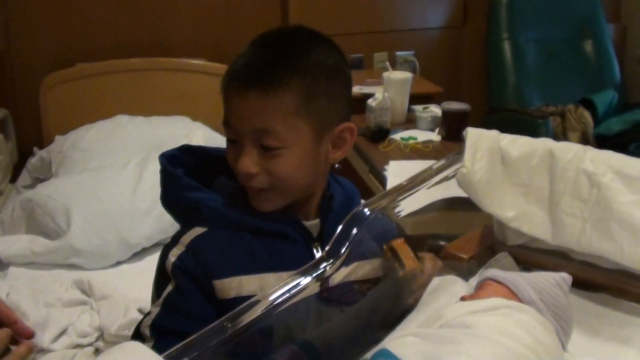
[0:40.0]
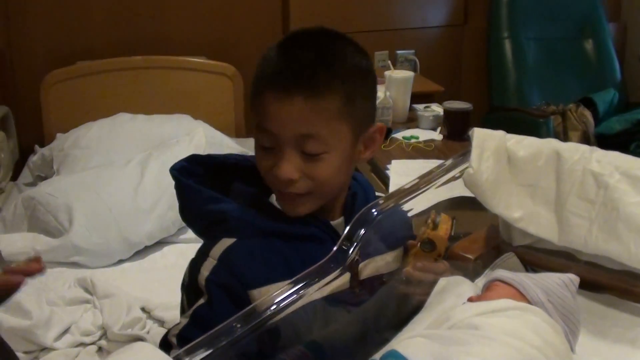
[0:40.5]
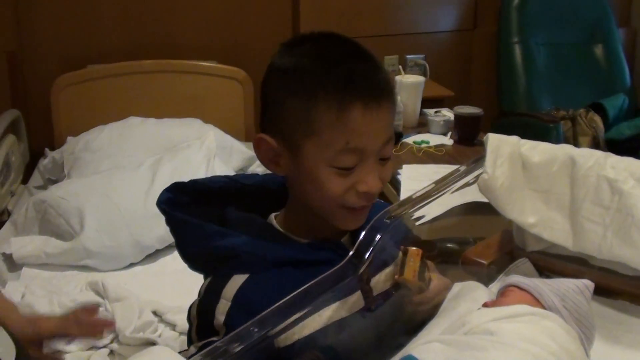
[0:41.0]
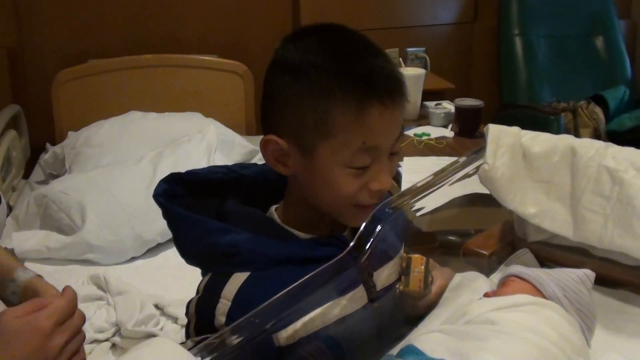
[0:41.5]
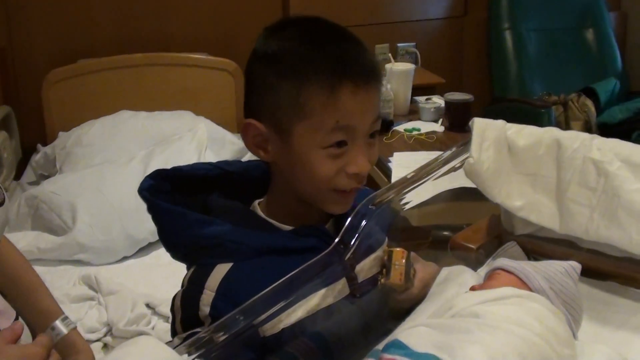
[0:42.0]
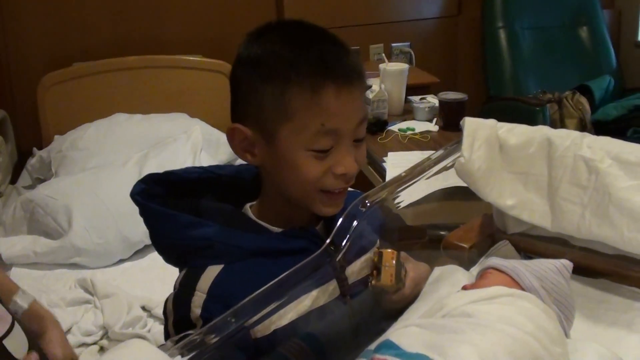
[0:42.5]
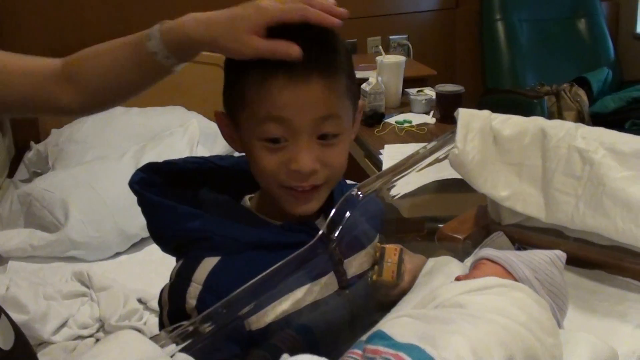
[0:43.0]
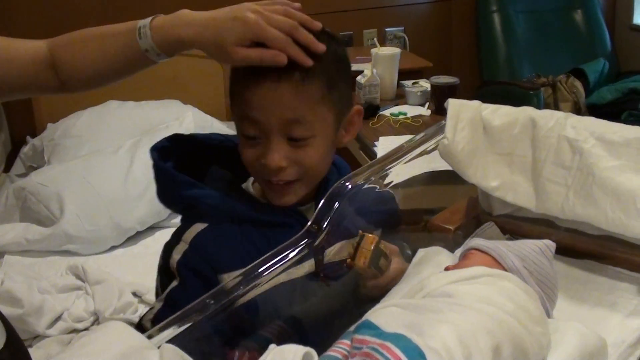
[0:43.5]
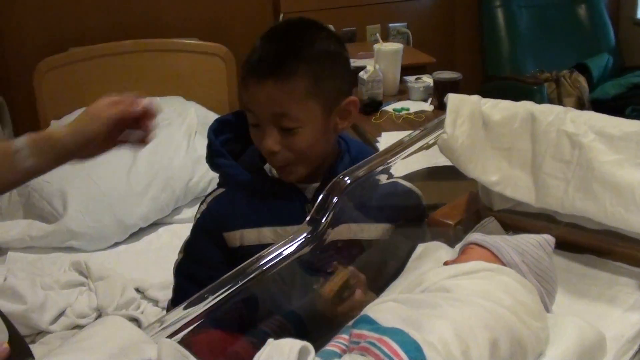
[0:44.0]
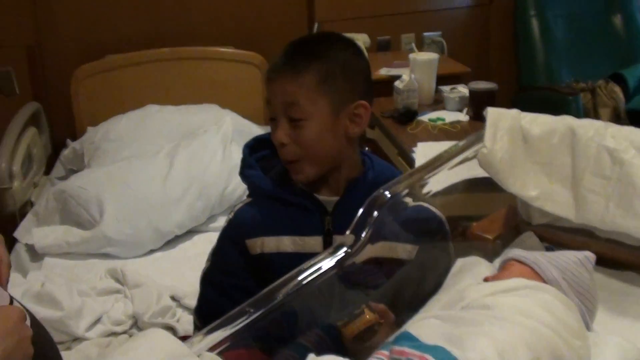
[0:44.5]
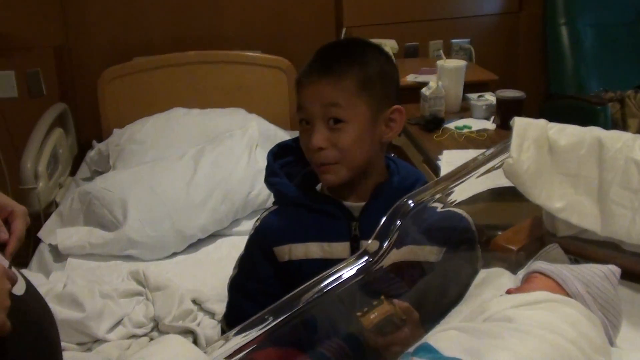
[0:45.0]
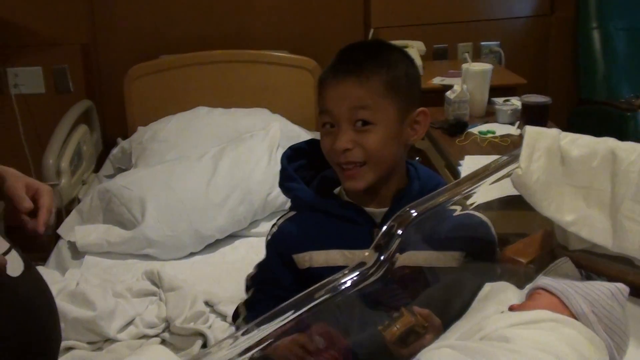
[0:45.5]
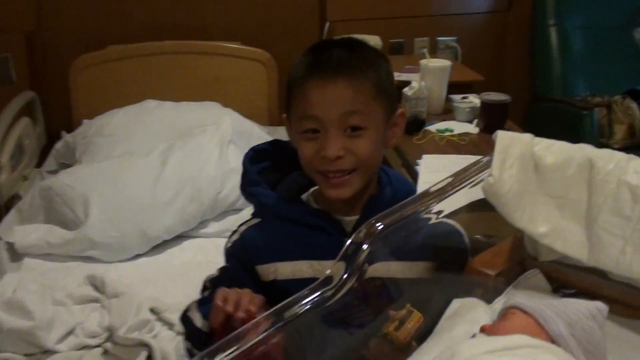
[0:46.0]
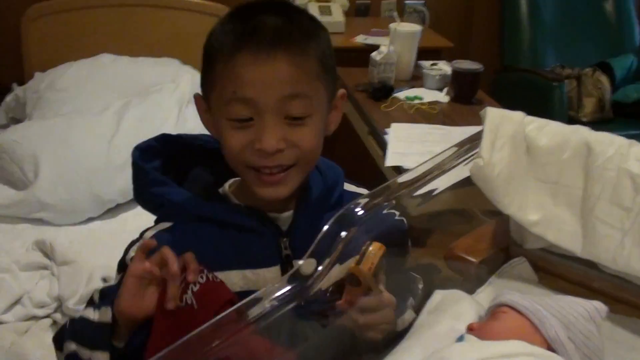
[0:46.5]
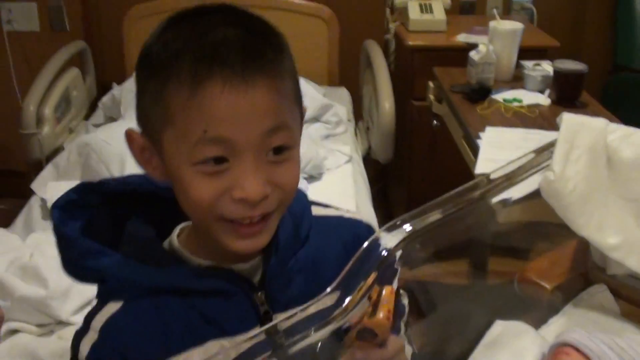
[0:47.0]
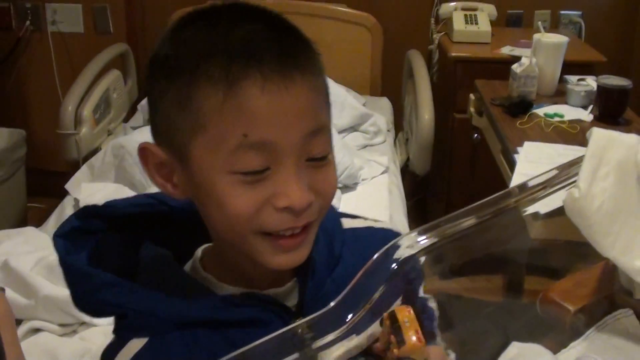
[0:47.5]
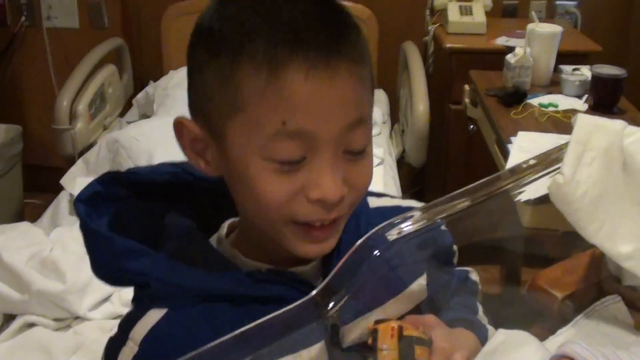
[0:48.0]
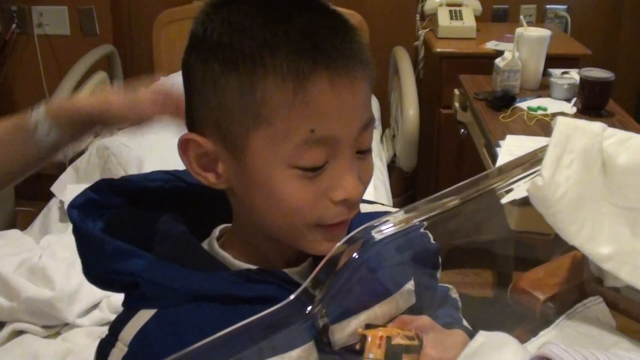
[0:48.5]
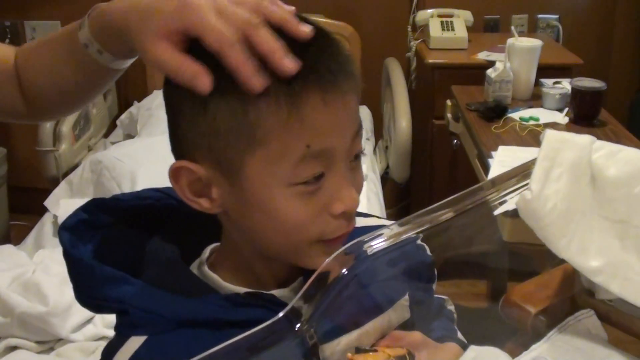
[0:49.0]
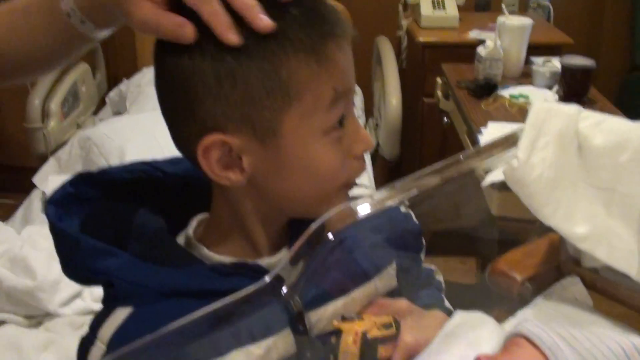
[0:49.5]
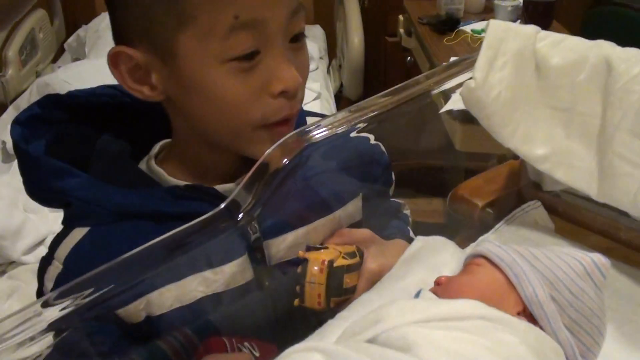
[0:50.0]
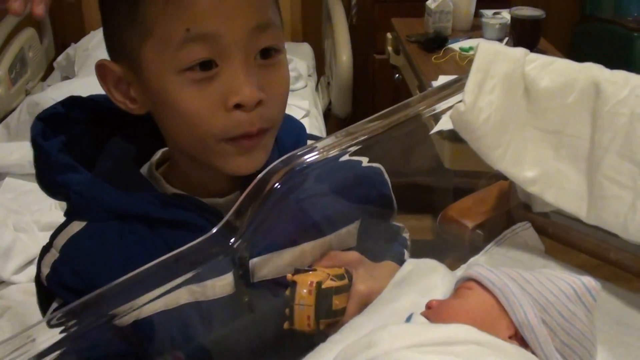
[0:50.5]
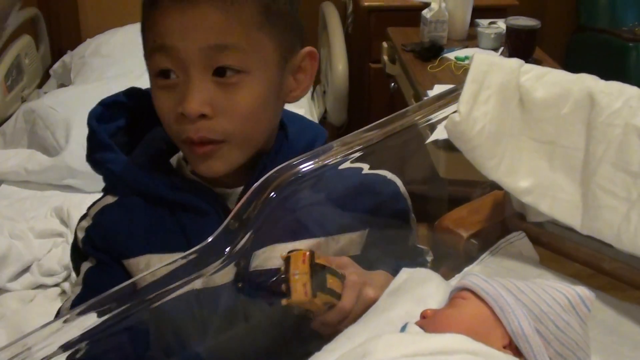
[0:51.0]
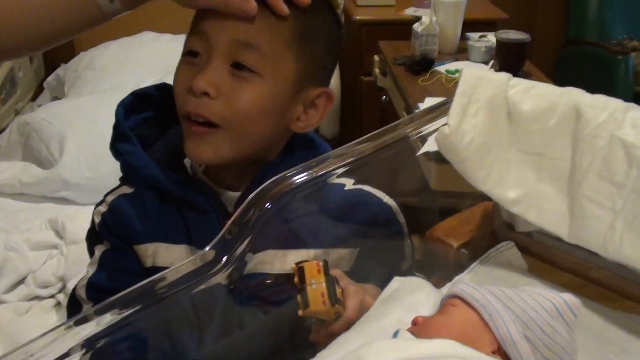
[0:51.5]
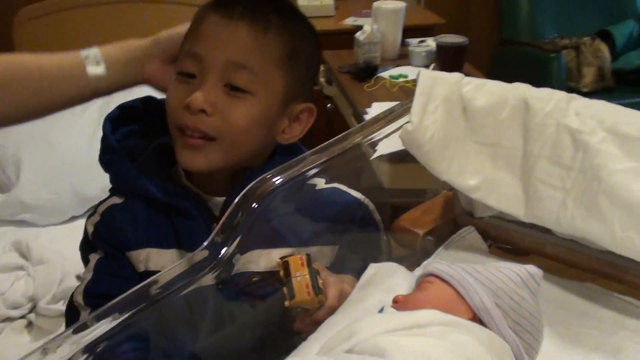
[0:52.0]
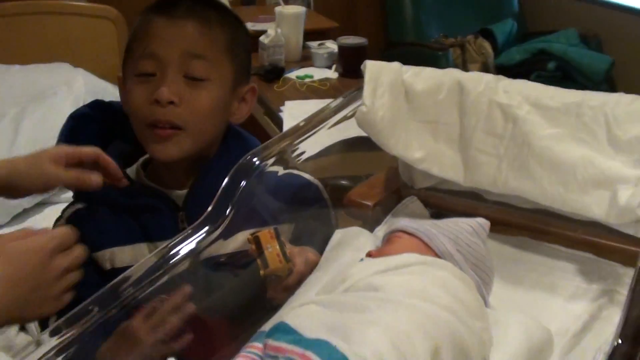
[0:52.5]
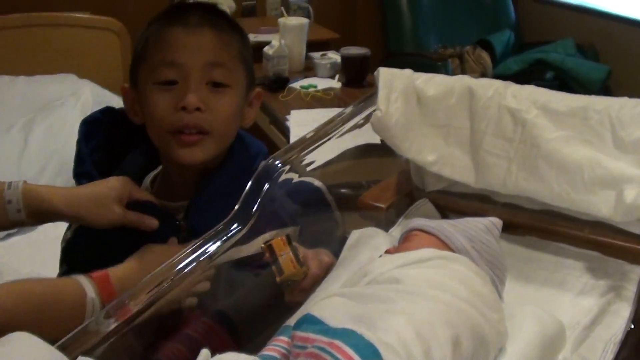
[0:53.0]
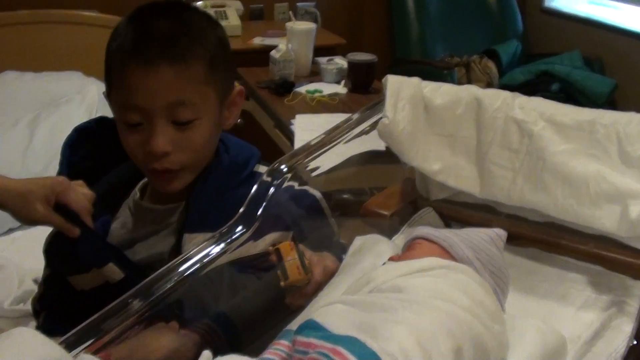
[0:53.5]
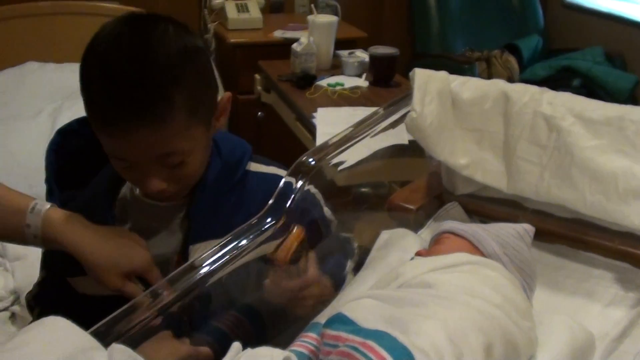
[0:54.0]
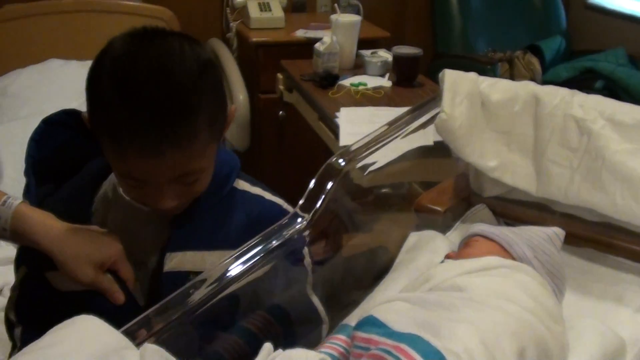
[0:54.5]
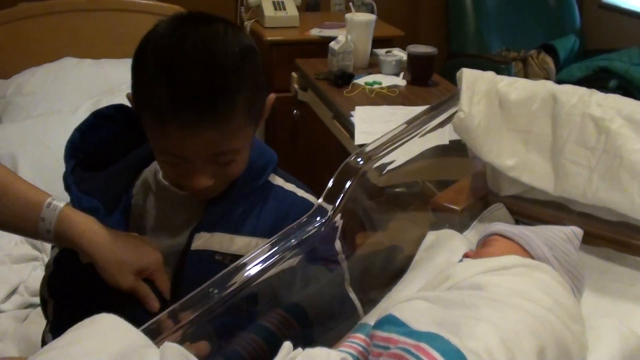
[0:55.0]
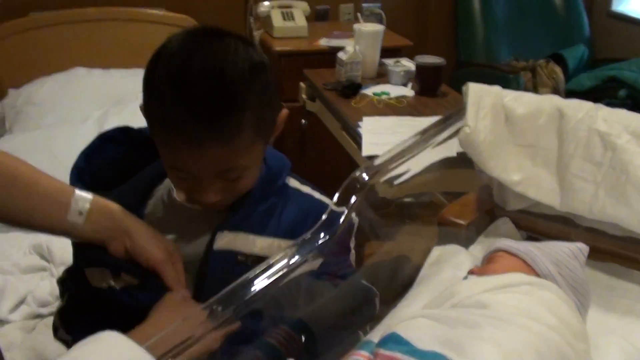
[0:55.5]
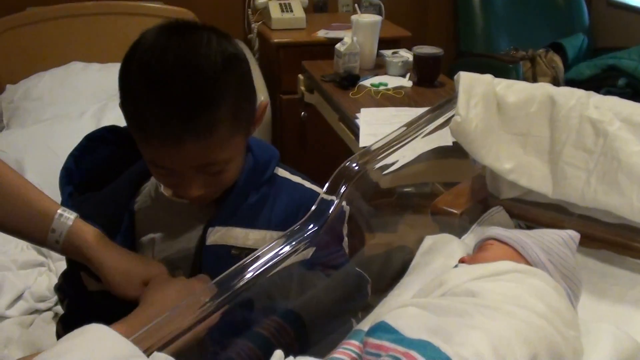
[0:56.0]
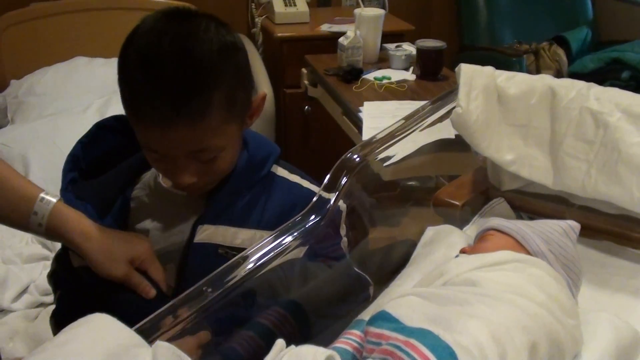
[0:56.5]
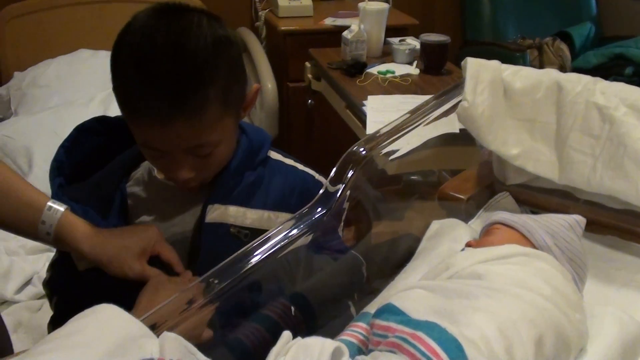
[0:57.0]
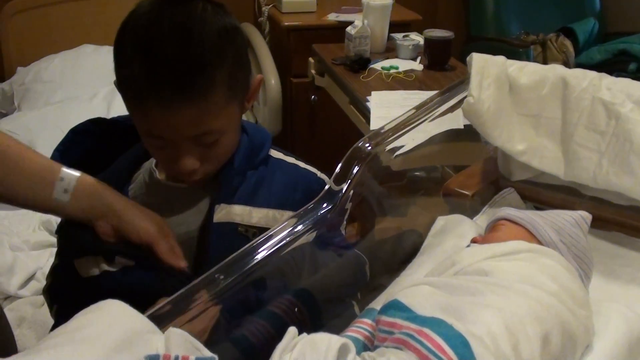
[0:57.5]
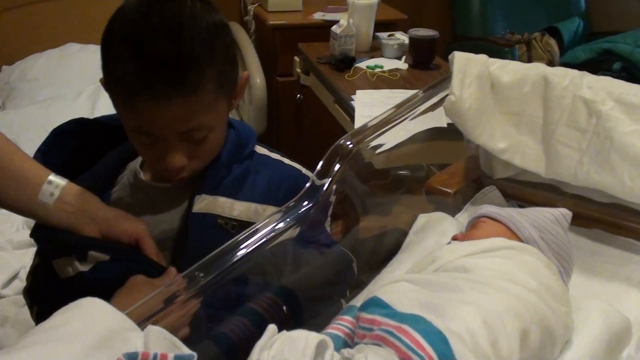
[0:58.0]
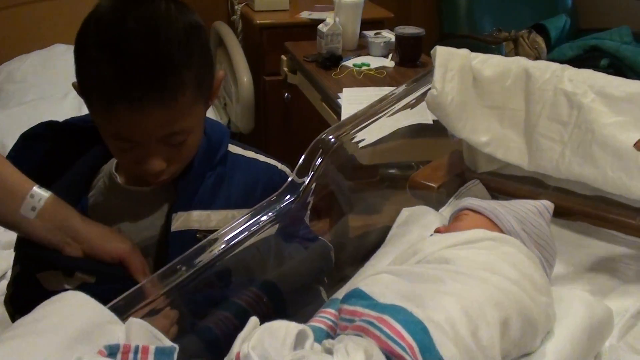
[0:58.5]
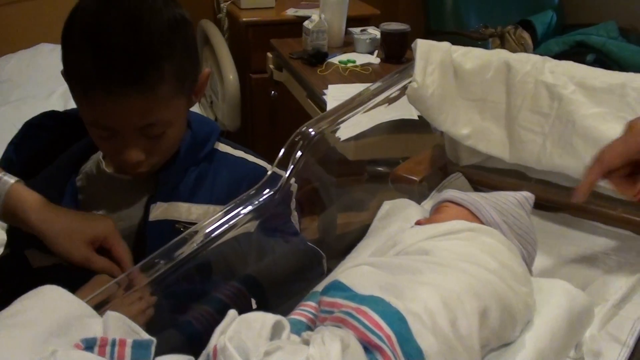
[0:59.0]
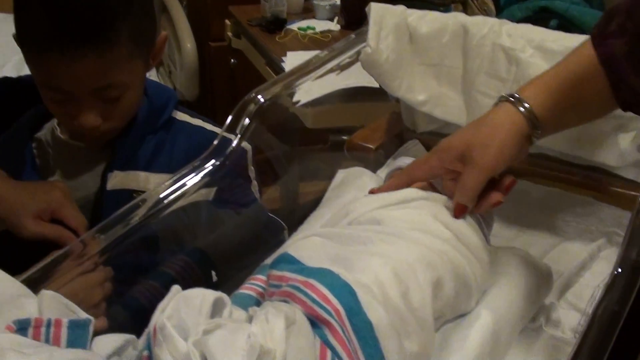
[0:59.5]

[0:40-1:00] The little boy stands at the side of the bassinet, holding his toy and looking down at the new baby, who is still sleeping, facing him, wrapped in blankets and wearing a hat. A white burp cloth is draped over the bassinet behind the baby. The boy looks at the other adult in the room and then to the side at his mother, smiling broadly and blinking. The mother reaches over, showing a hospital bracelet on her wrist, puts her hand on the boy's head and rubs it. He turns, looks at her and speaks to her, then walks up to the bassinet again and looks down at the baby; he does not seem to want to leave the baby's side. The mother again puts her hand on his head and rubs it affectionately, then helps him unzip his coat, pulling the zipper down as he looks down at it. The woman on the other side of the baby, possibly an older relative, maybe the grandmother, puts her hand on the baby.